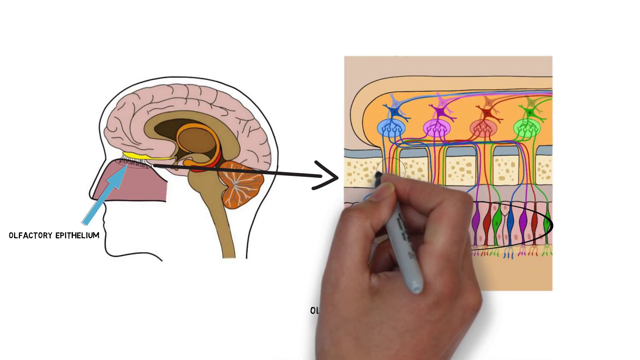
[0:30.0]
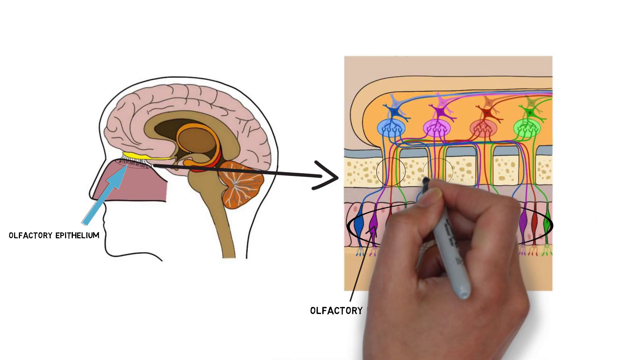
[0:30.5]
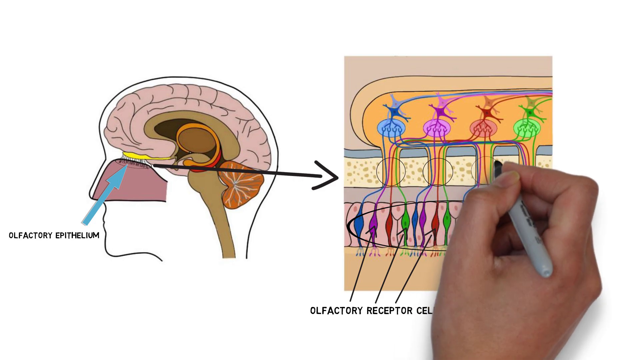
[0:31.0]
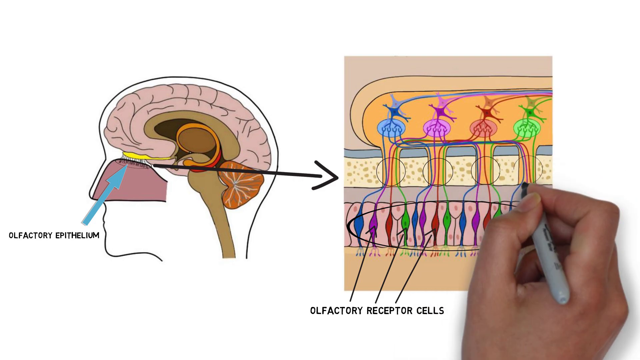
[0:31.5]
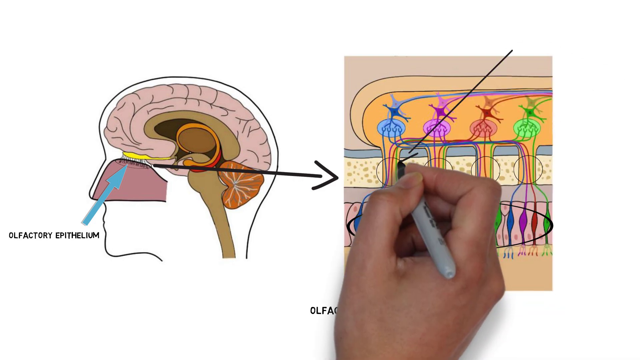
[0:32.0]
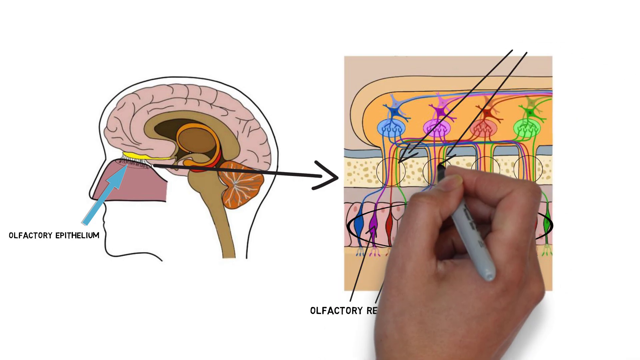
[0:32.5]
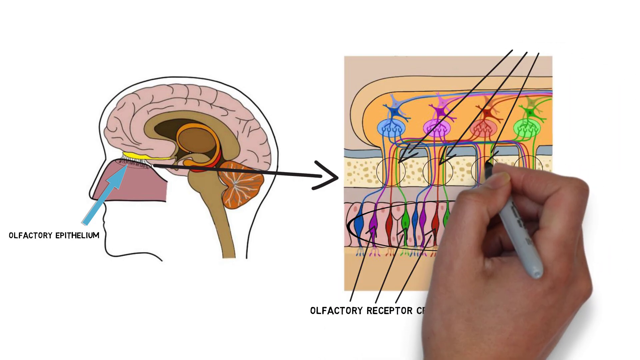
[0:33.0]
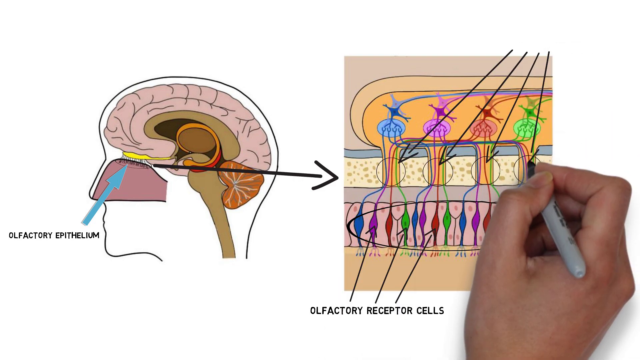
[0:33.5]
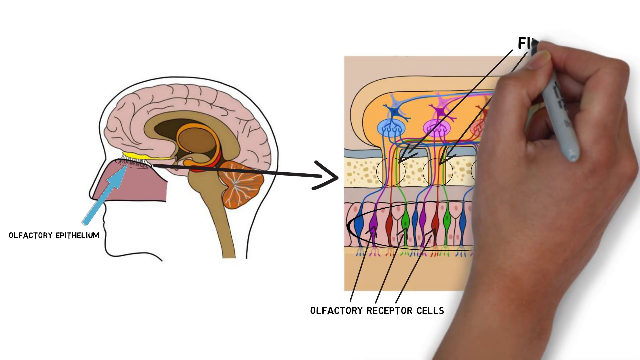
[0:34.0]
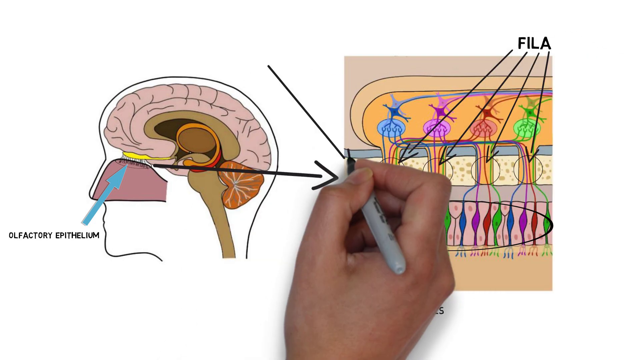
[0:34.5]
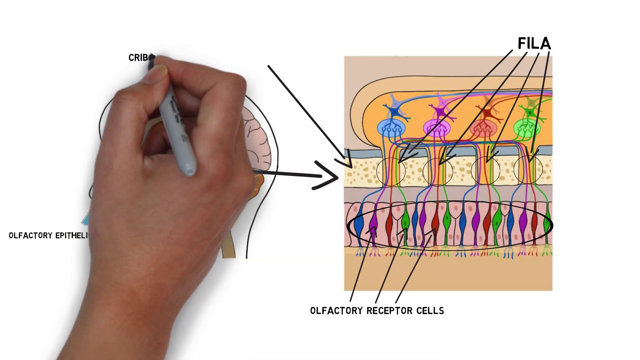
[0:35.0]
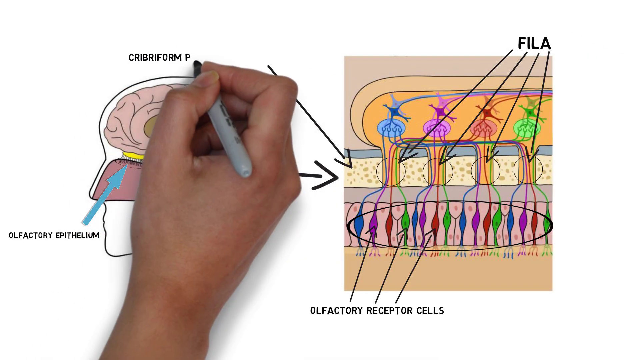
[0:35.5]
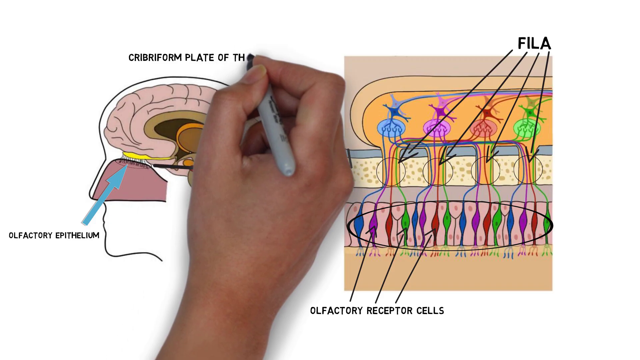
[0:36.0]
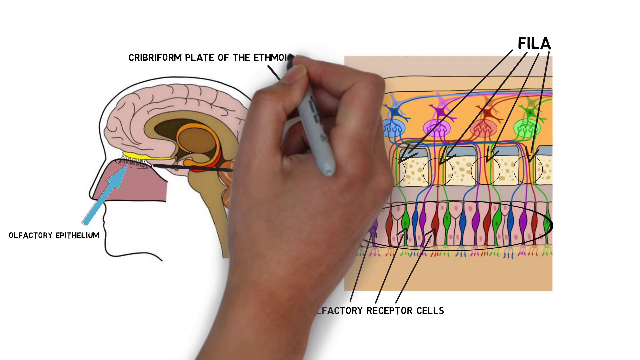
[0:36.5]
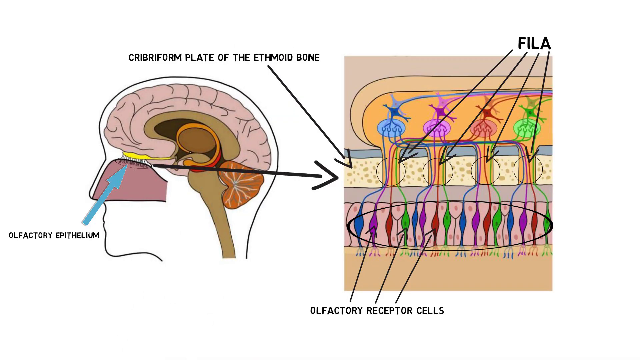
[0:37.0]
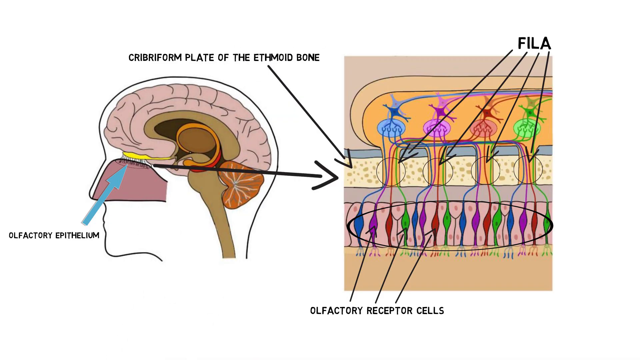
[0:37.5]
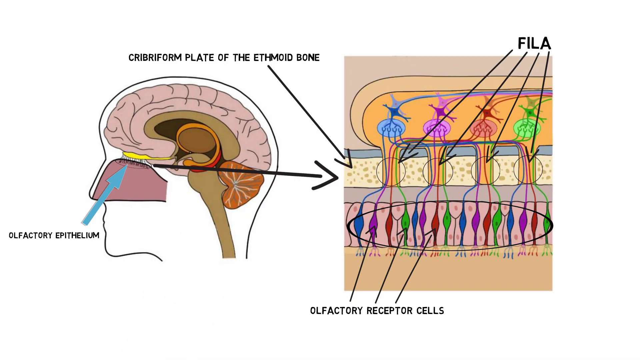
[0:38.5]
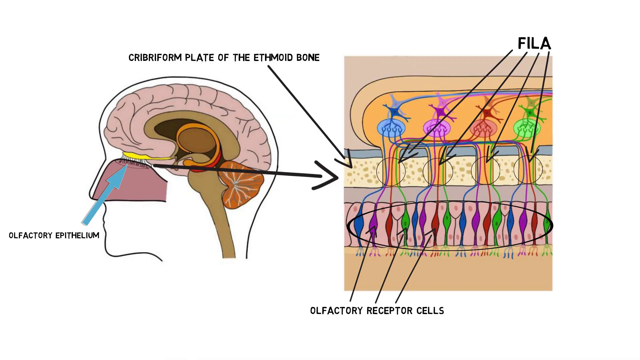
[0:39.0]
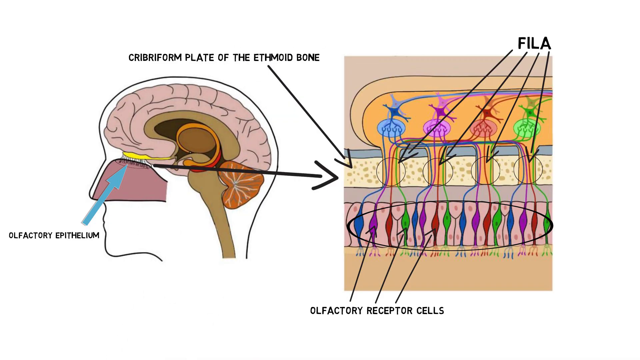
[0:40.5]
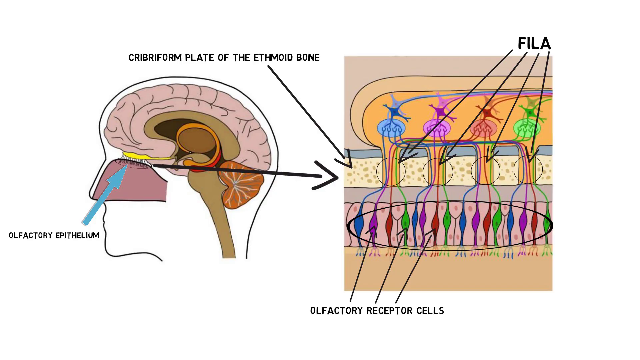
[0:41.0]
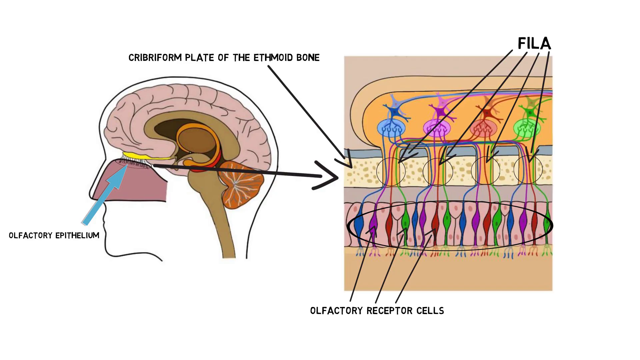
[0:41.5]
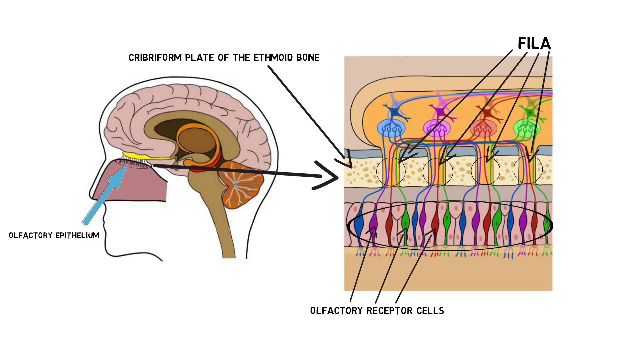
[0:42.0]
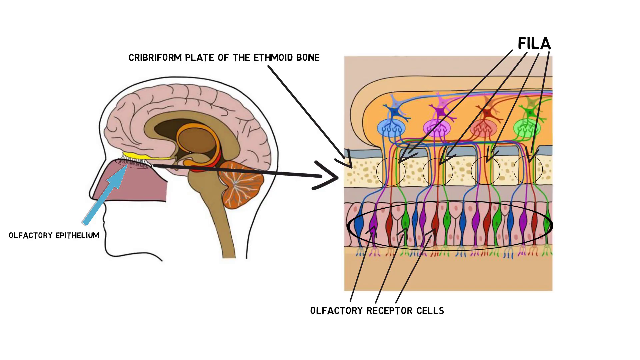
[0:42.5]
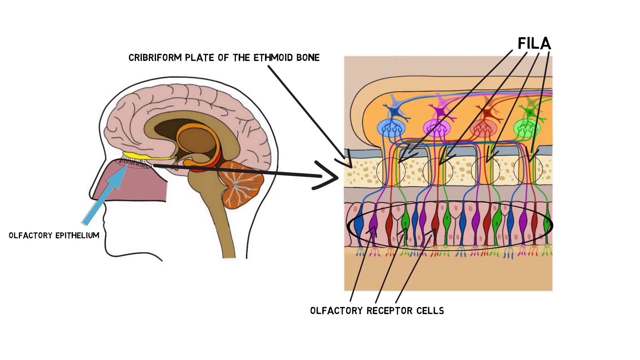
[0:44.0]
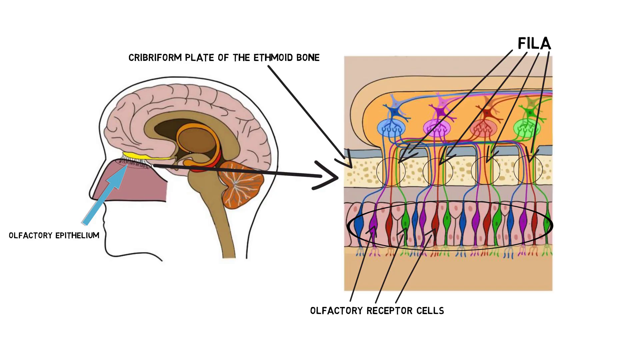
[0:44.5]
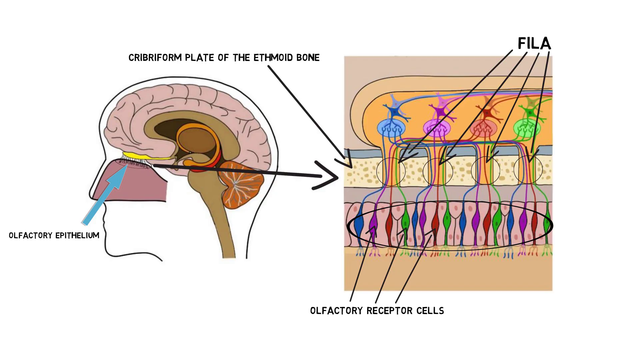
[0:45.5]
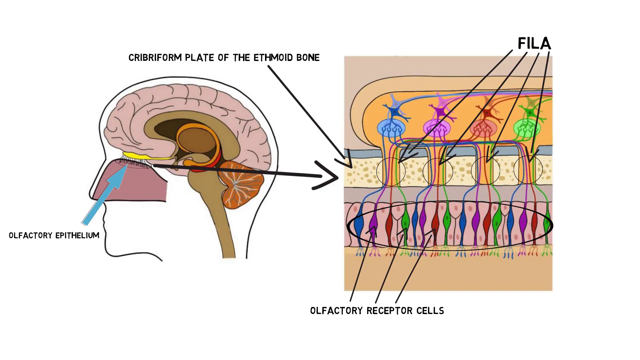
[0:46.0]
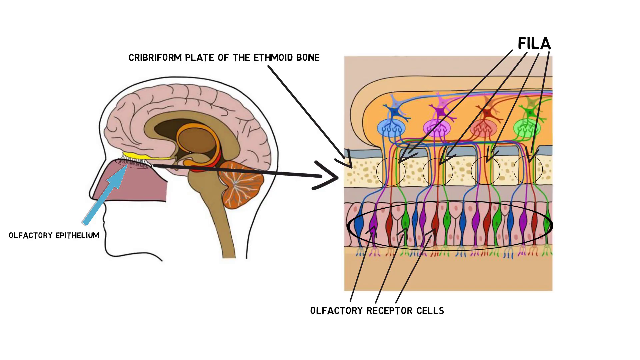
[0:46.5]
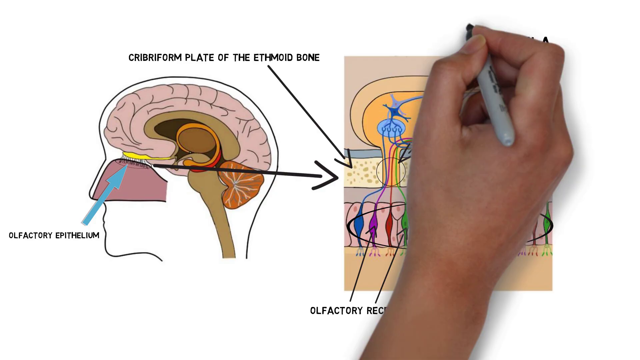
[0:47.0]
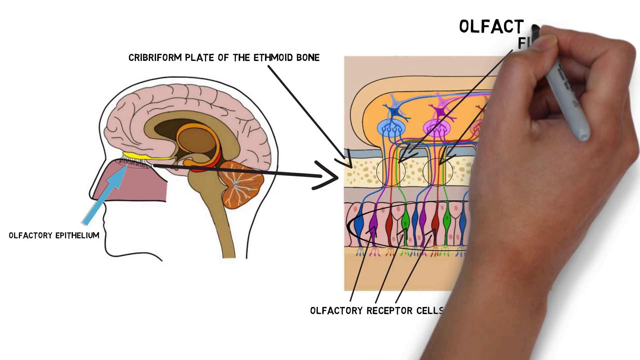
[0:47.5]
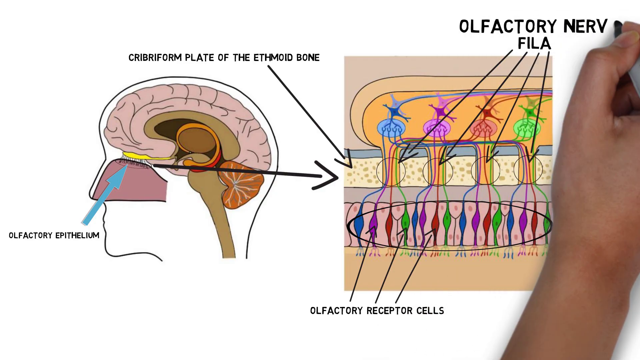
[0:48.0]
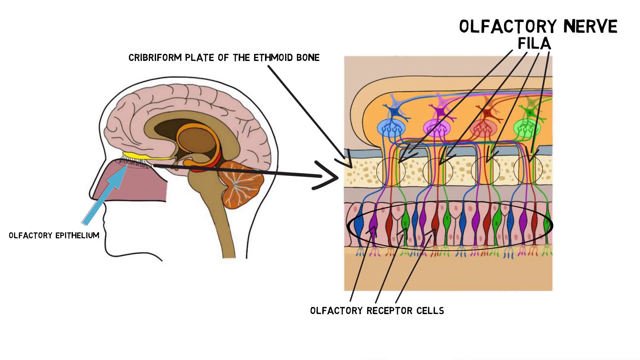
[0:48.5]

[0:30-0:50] Working from the olfactory receptor cells, he labels further structures and draws another arrow to the plate of the ethmoid bone, which lies between those structures and the receptor cells. He then writes "olfactory nerve". A hand holding a gray pen that writes in black does the pointing and labeling. Different colors are used: there is a blue circle, the nerves appear to be colored in blue, purple, brown and green, and the olfactory receptors are labeled in brown.